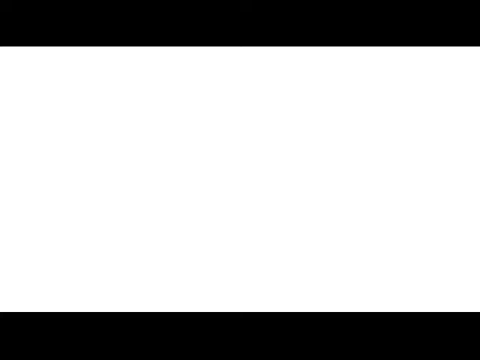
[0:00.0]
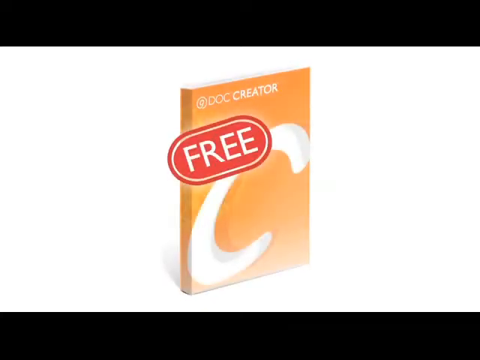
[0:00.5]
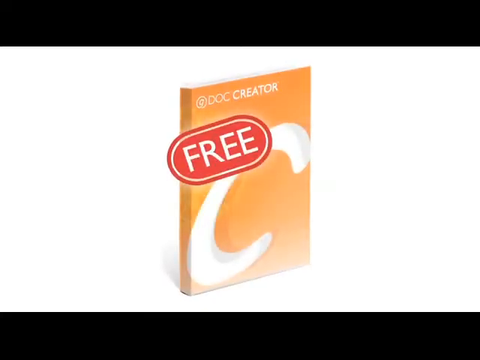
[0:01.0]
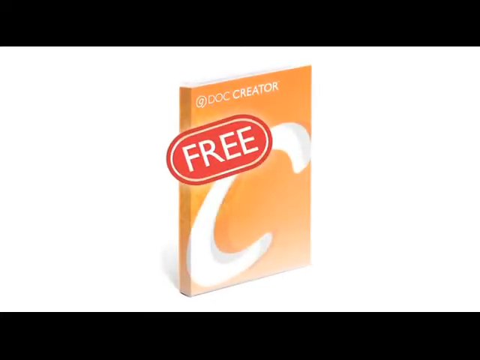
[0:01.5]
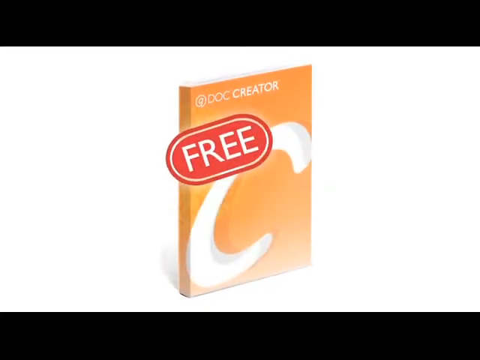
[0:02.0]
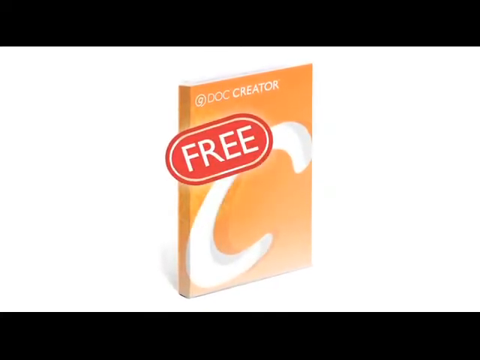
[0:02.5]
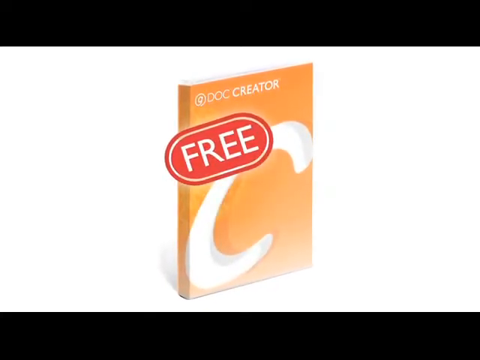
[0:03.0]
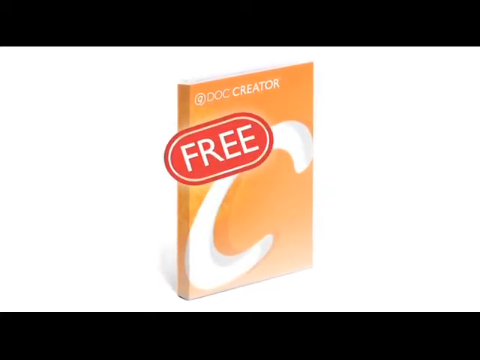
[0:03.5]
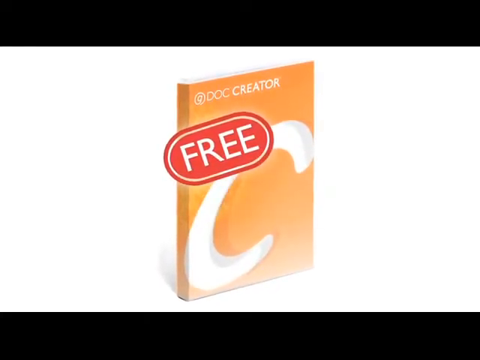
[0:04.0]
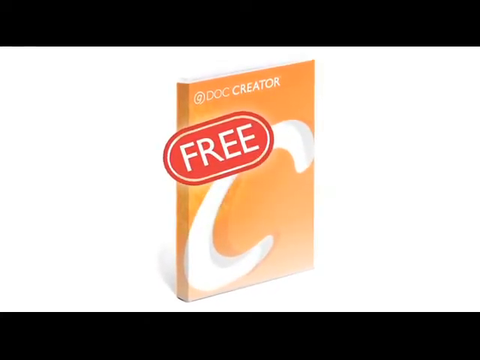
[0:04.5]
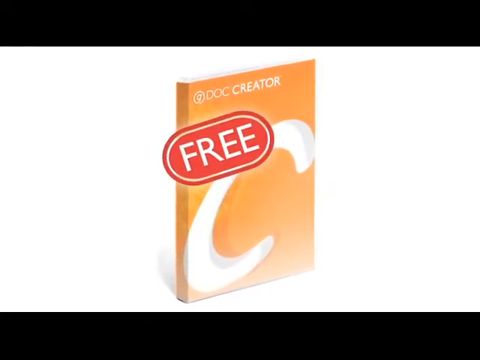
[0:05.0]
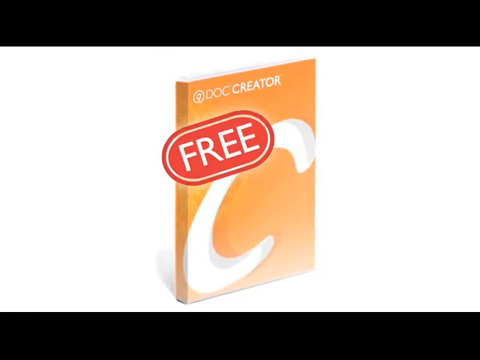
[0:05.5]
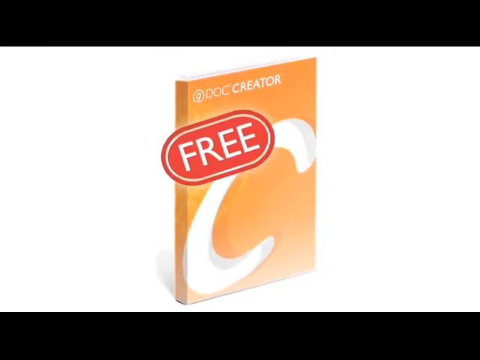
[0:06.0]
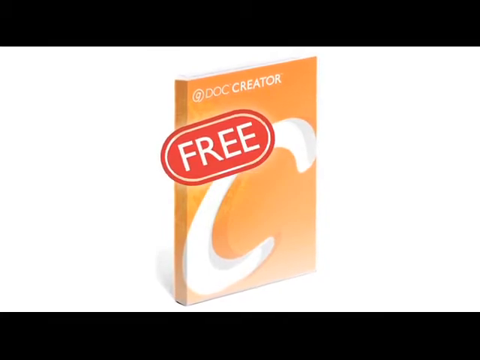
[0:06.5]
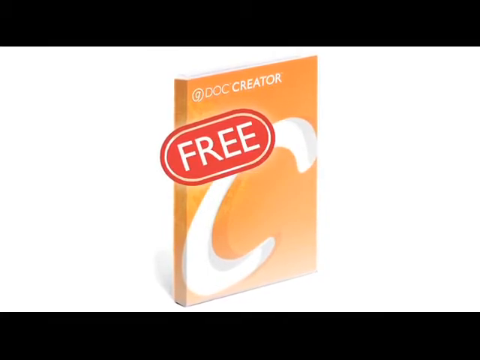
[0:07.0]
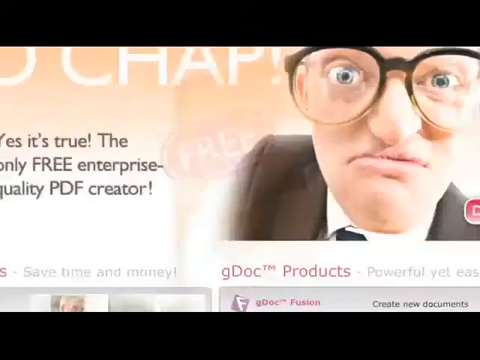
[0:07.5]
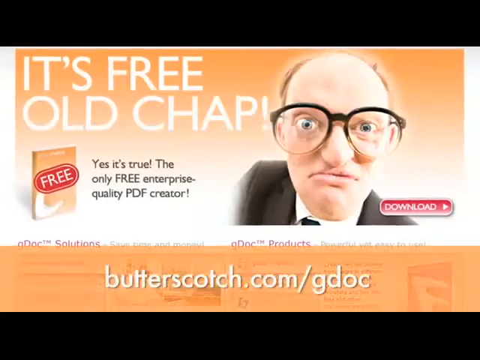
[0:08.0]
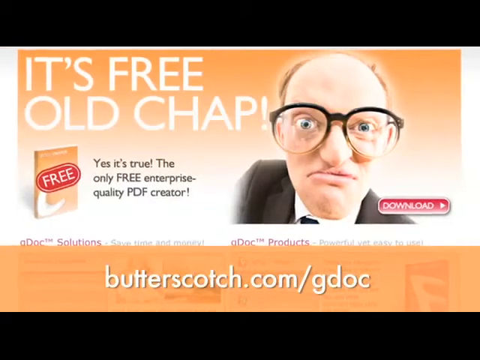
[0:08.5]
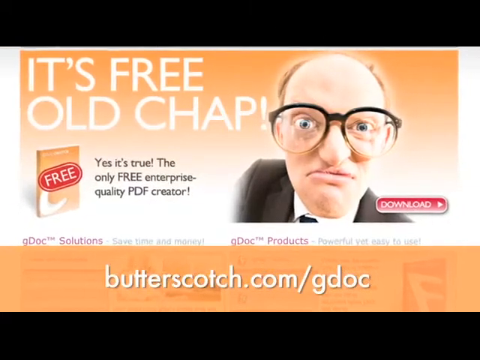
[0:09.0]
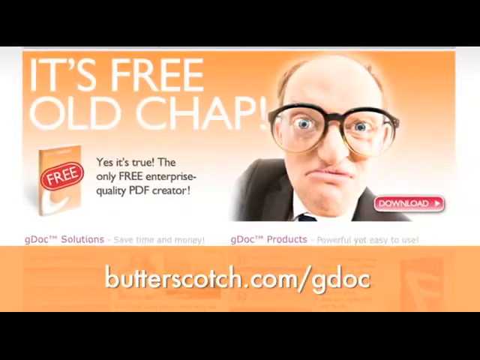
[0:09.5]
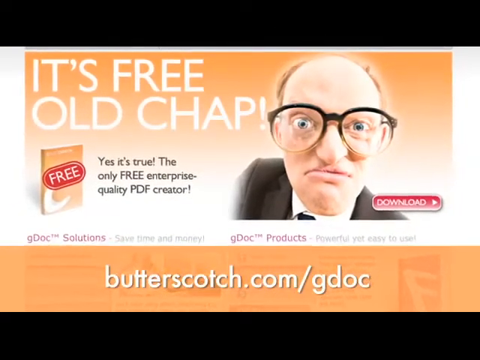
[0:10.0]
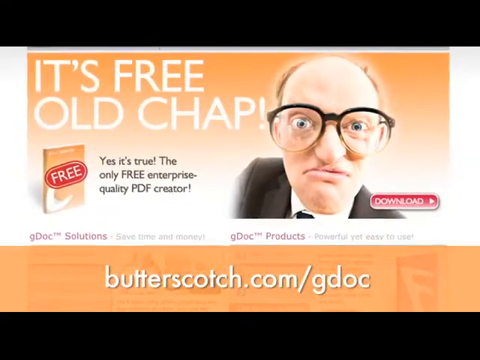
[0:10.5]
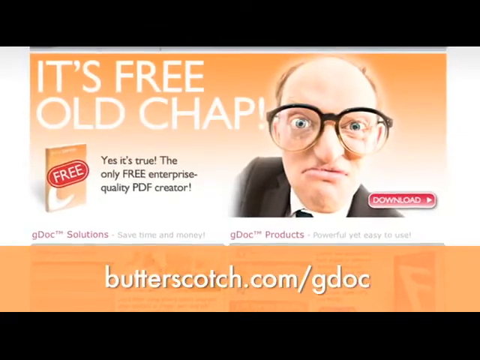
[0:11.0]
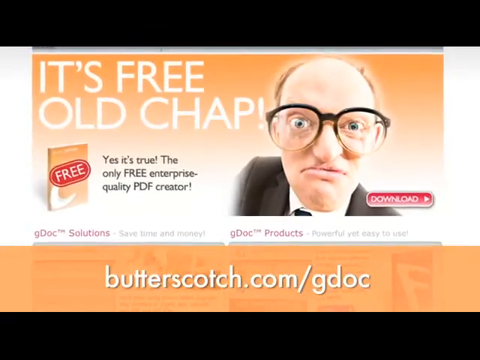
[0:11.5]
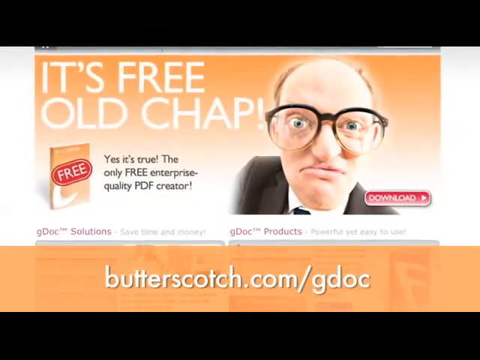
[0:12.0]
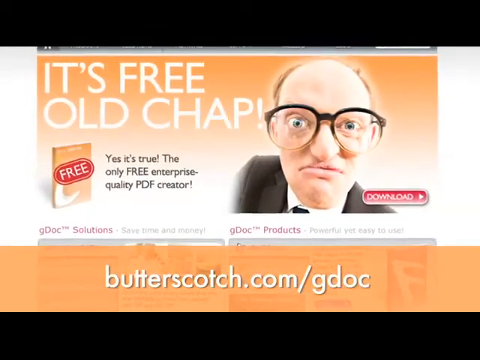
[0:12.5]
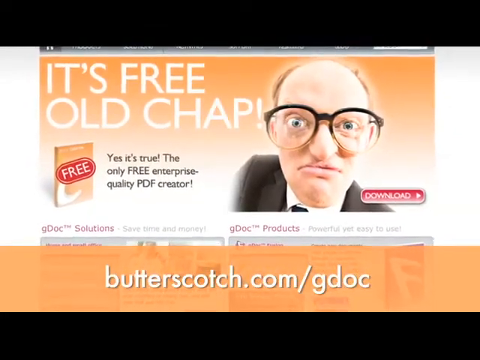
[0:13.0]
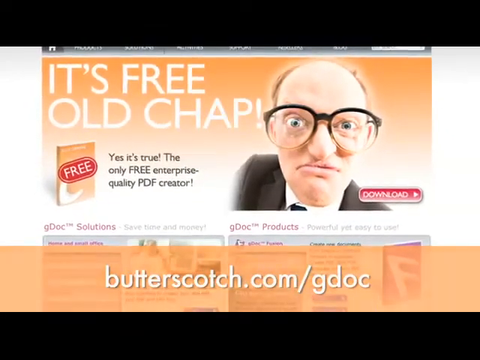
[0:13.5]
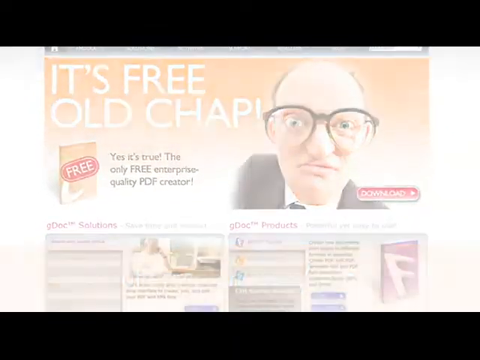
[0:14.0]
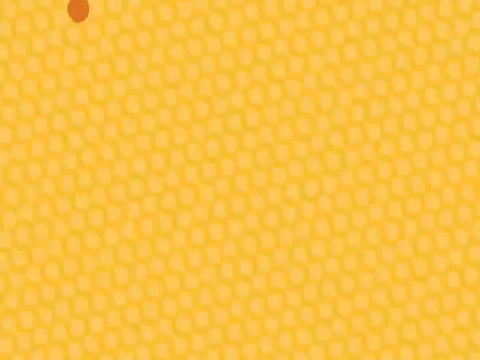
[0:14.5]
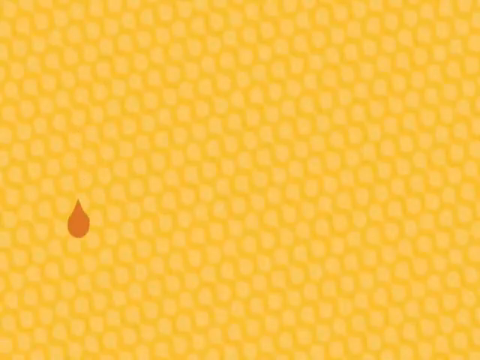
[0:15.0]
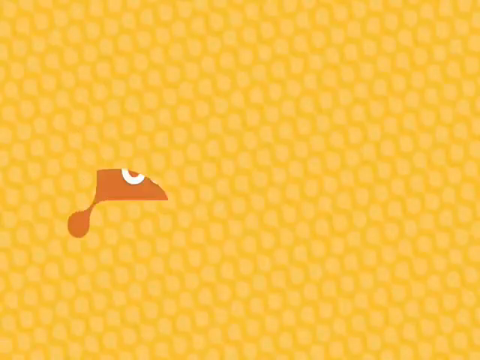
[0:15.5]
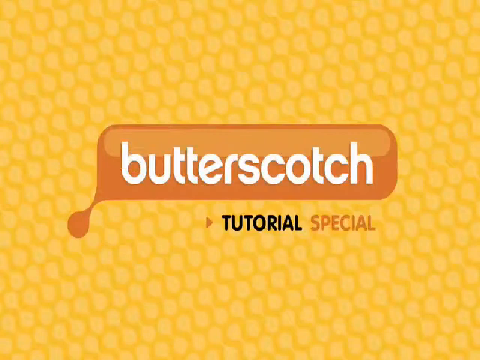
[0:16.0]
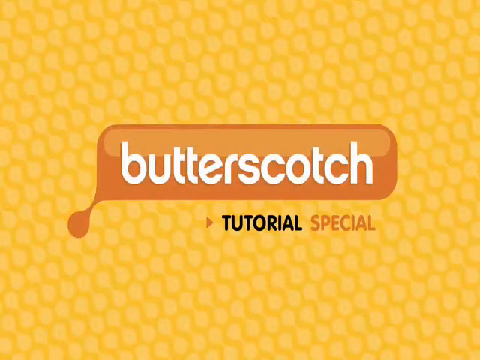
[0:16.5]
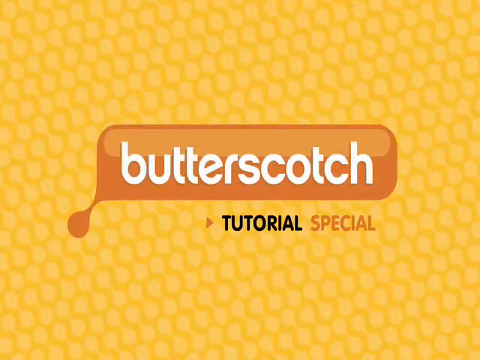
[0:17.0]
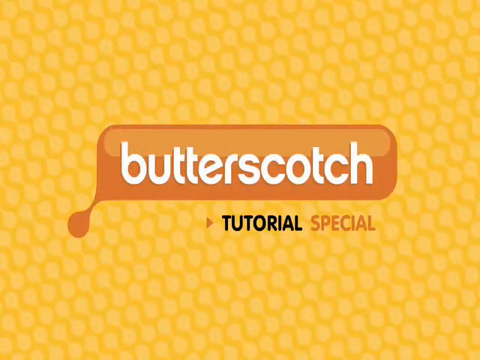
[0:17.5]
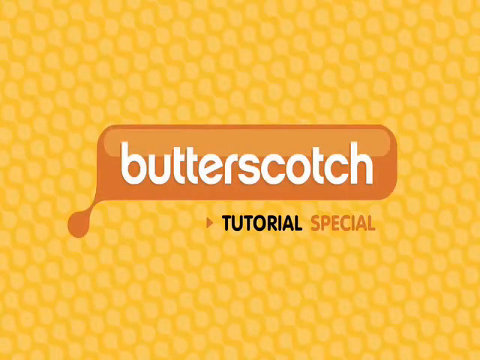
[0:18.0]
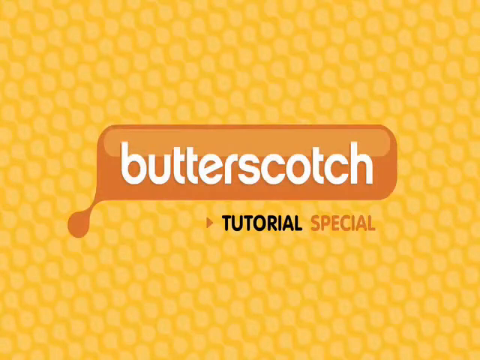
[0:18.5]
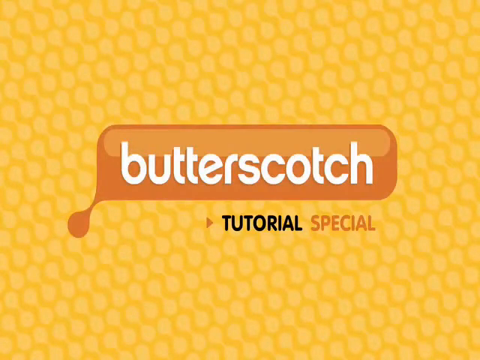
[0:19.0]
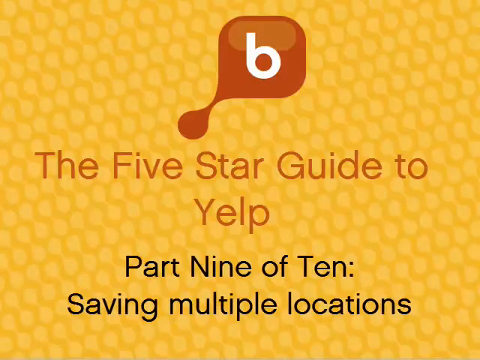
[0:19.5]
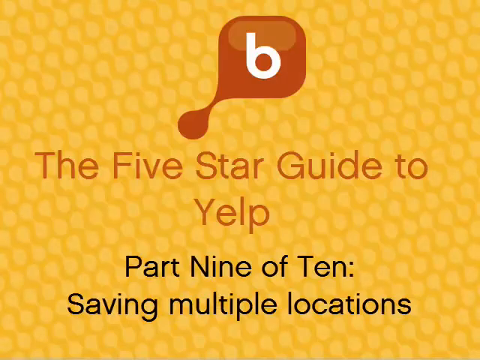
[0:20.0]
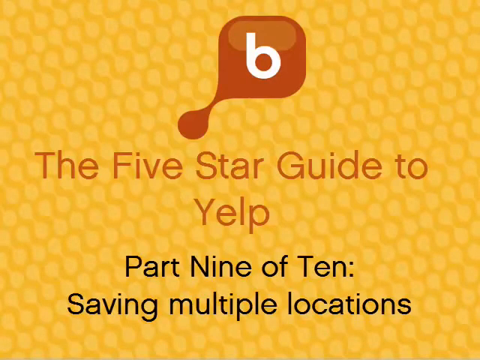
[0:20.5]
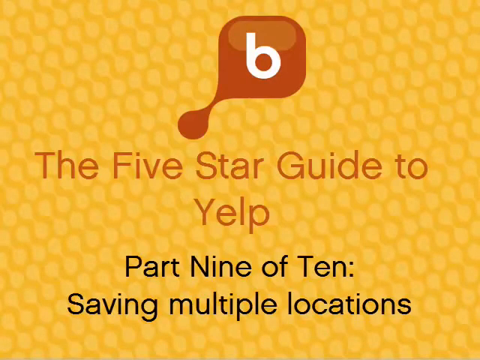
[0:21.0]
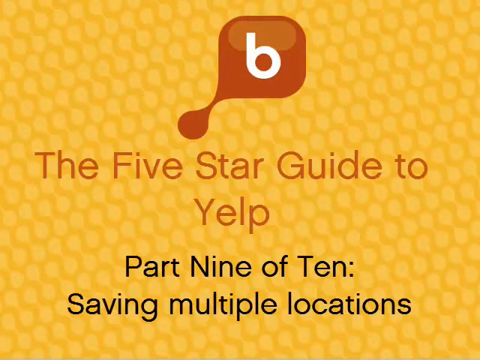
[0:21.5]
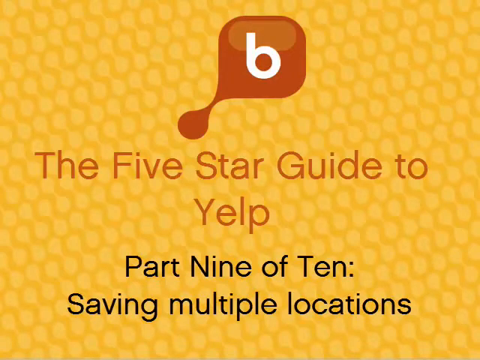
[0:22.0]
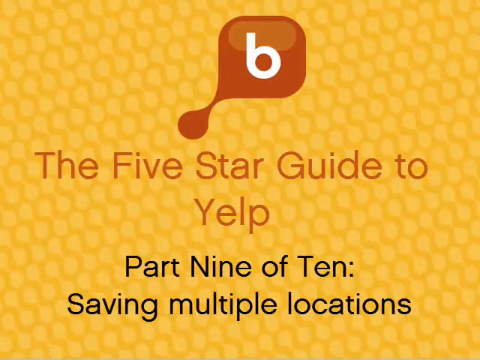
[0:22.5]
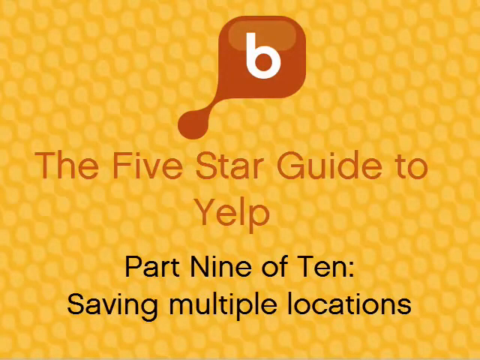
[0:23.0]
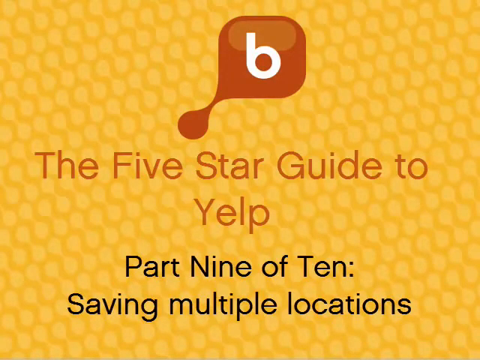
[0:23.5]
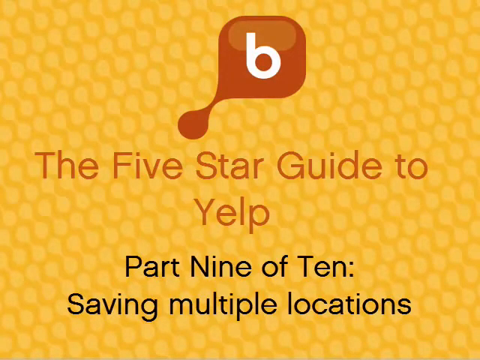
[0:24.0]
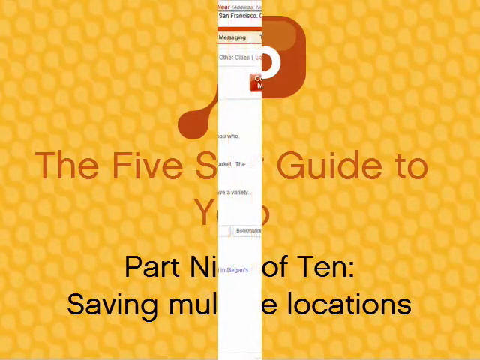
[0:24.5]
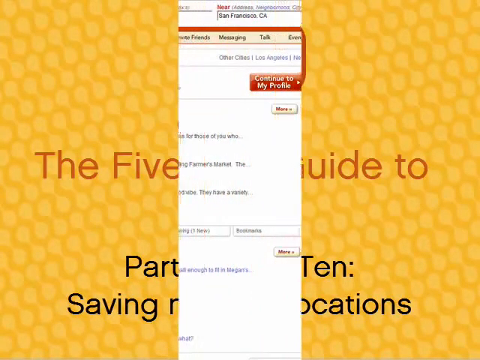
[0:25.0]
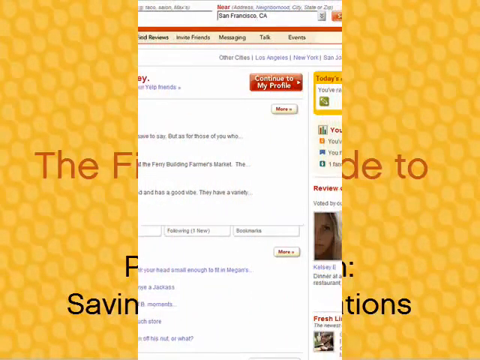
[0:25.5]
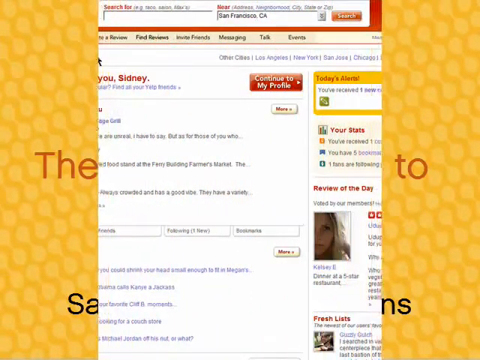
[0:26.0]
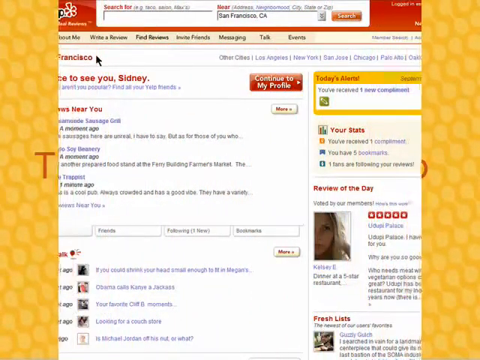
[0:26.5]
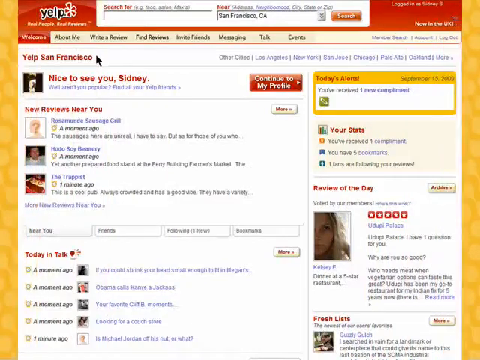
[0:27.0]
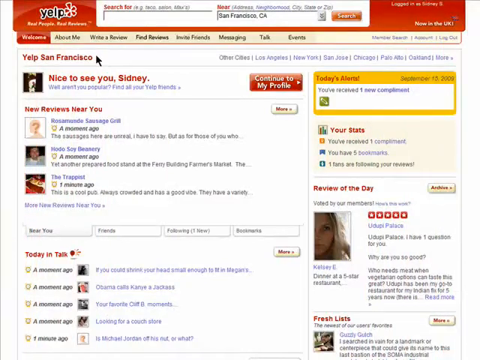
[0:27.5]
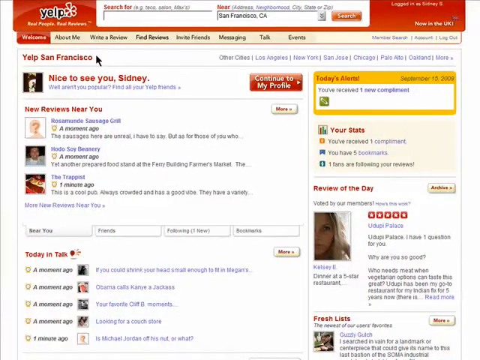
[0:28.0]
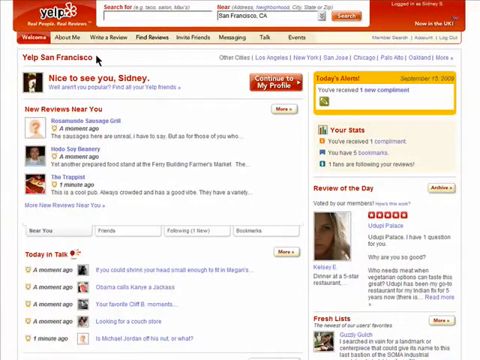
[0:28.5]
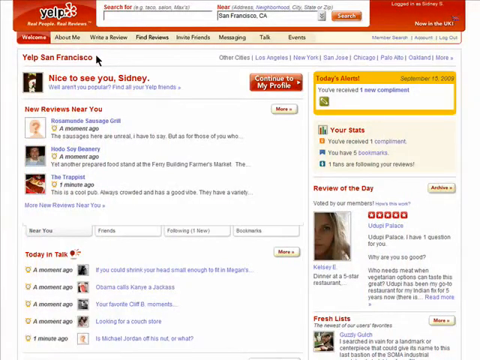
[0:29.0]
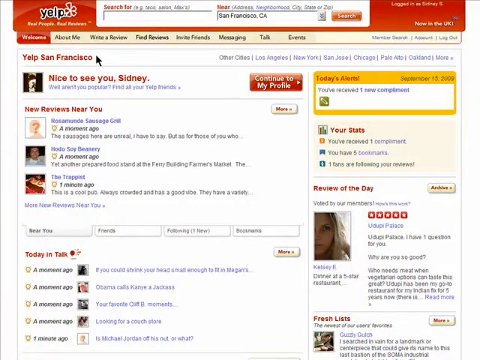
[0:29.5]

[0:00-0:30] The video starts with a blank white screen, and then an orange book pops up. At the top of the book is an "@" and then ".creator" in white. Under ".creator" is a red bubble with "free" written in white letters. Under the "free" bubble is what looks like a white C, and the whole book is orange. The scene fades out, and an old man of about 60 appears on screen. He wears thick black-rimmed glasses, has blue eyes and is in a suit, and right by him is a red bubble with "download" written in white. It is a webpage that says "it's free old chap." The book is seen again, and then the letters "yes it's true the only free enterprise quality pdf" appear, while the page keeps getting zoomed out. Next comes an orange honeycomb screen with lighter orange honeycomb patterning within it. "Butterscotch" appears in a darker orange bubble, and under the bubble is "tortilla special."